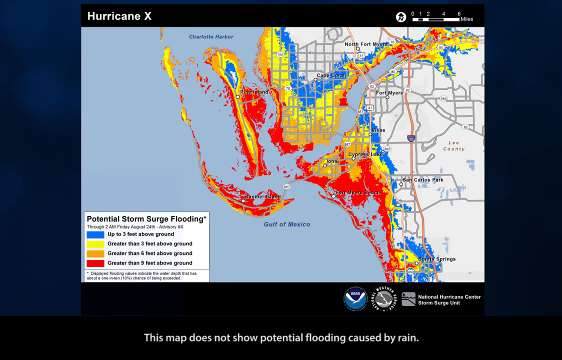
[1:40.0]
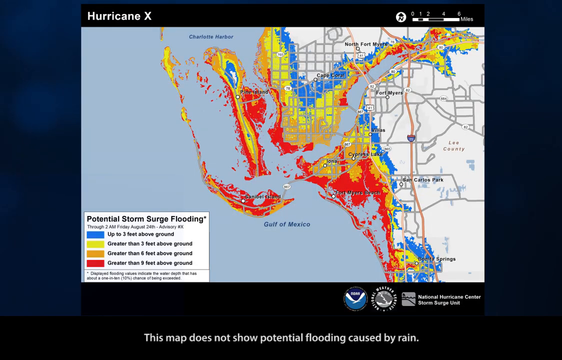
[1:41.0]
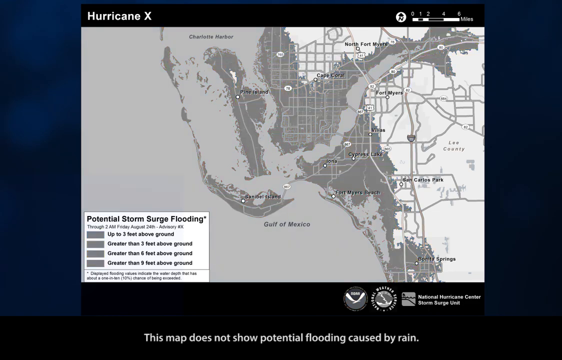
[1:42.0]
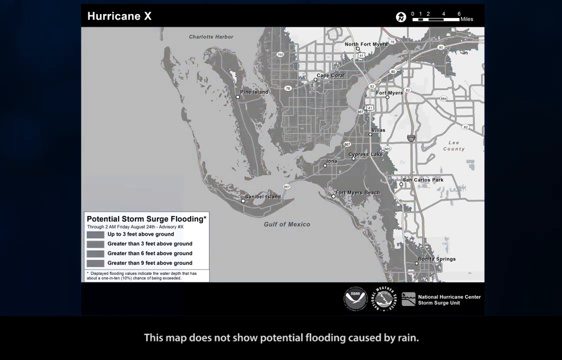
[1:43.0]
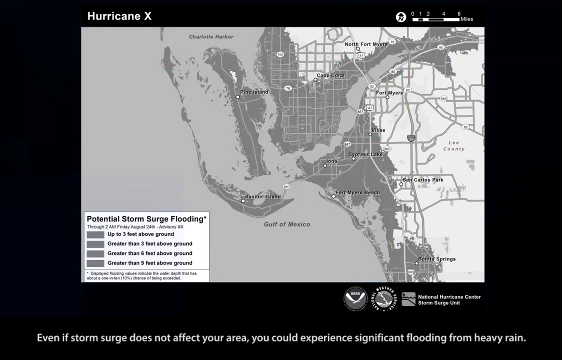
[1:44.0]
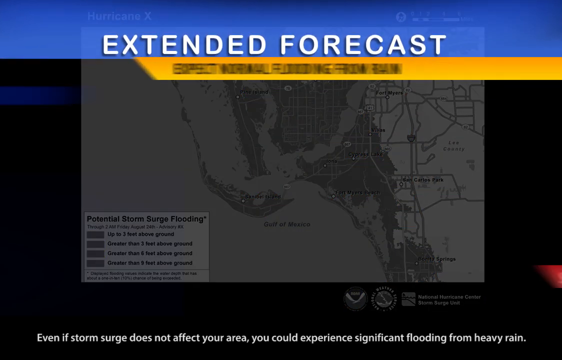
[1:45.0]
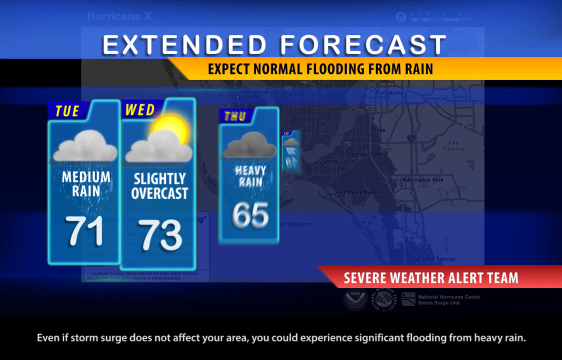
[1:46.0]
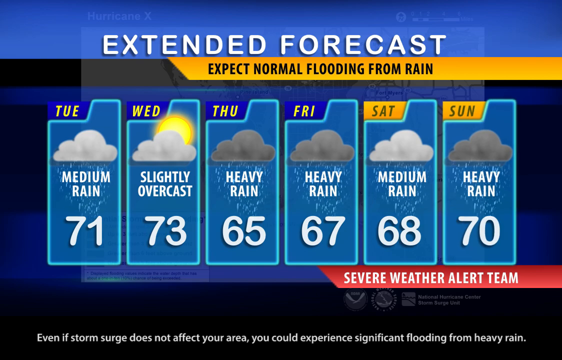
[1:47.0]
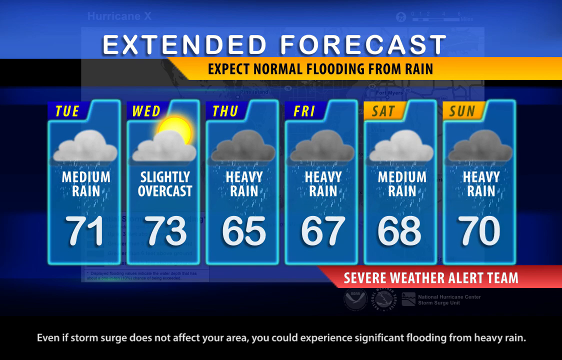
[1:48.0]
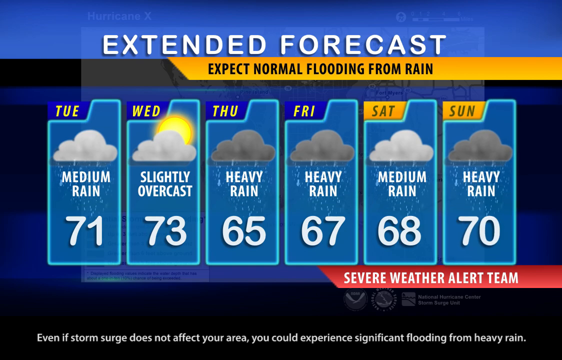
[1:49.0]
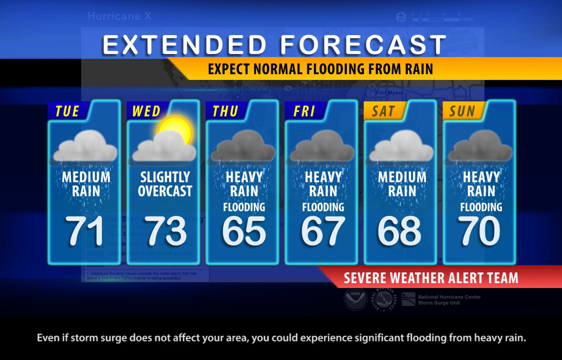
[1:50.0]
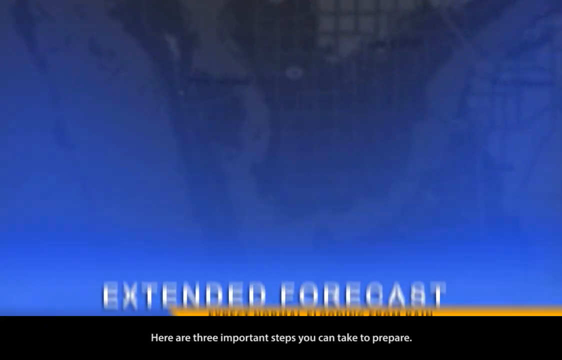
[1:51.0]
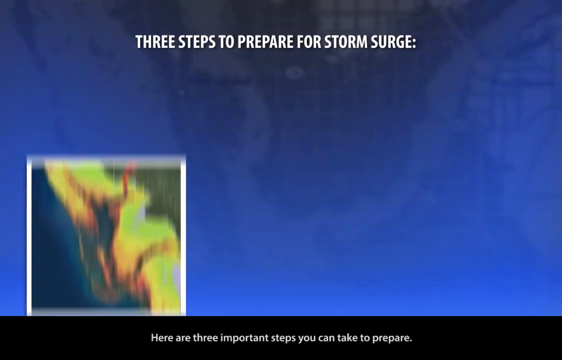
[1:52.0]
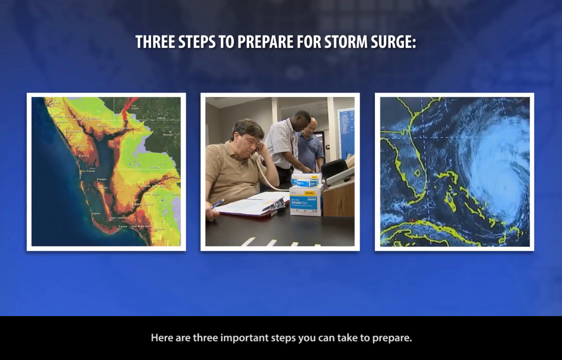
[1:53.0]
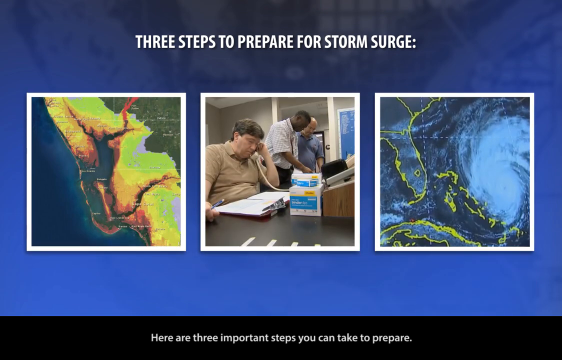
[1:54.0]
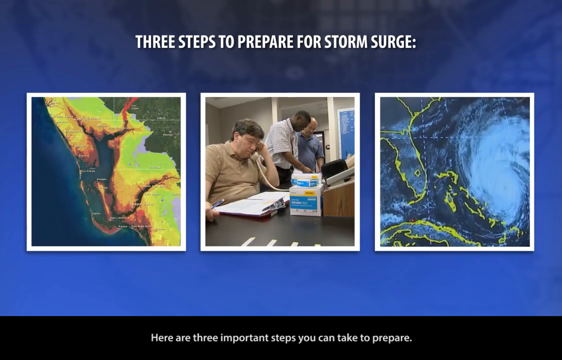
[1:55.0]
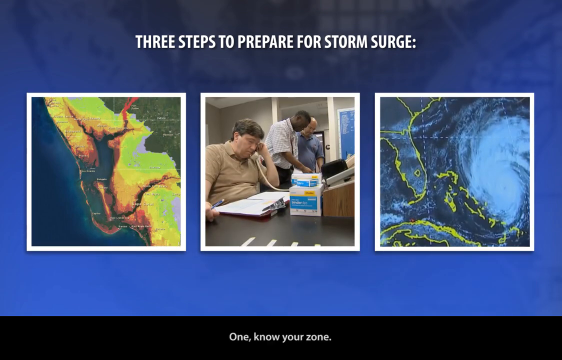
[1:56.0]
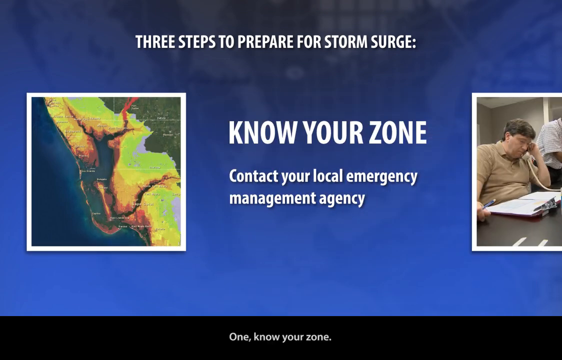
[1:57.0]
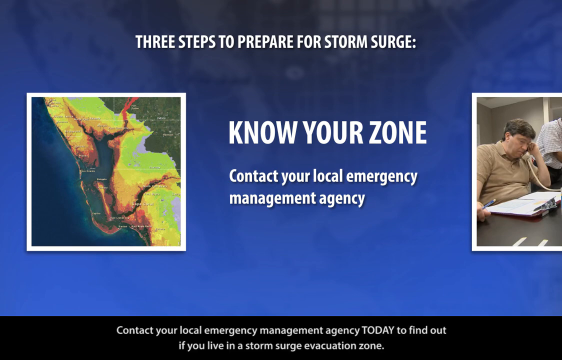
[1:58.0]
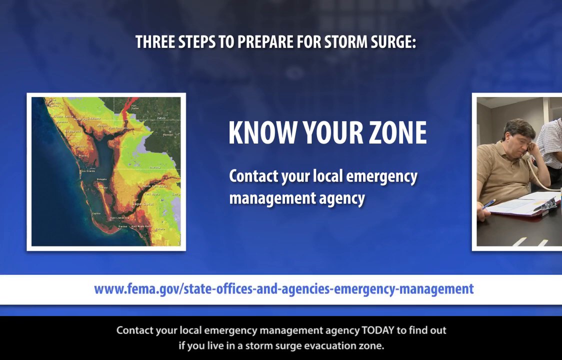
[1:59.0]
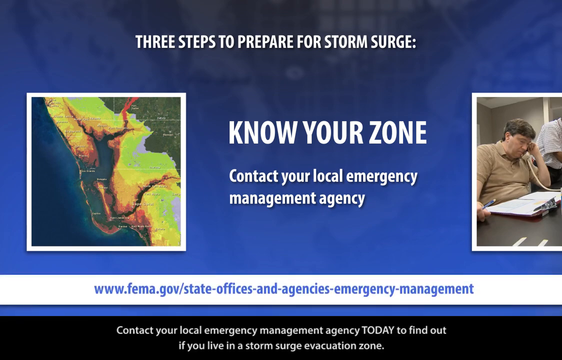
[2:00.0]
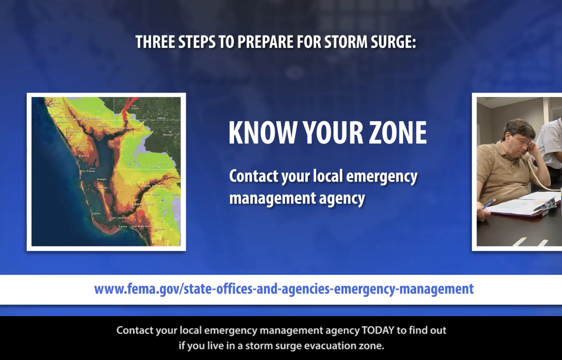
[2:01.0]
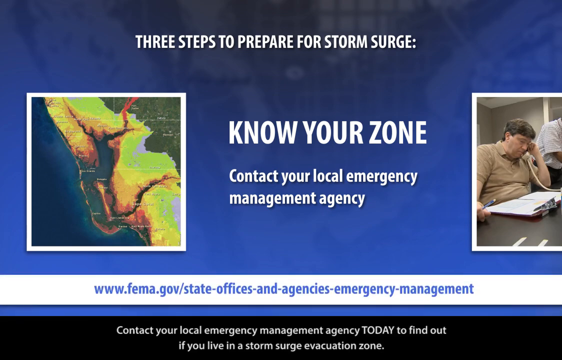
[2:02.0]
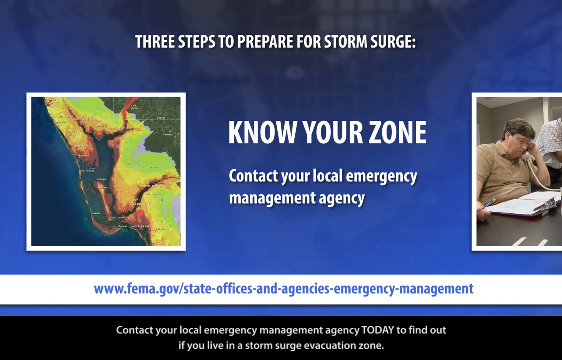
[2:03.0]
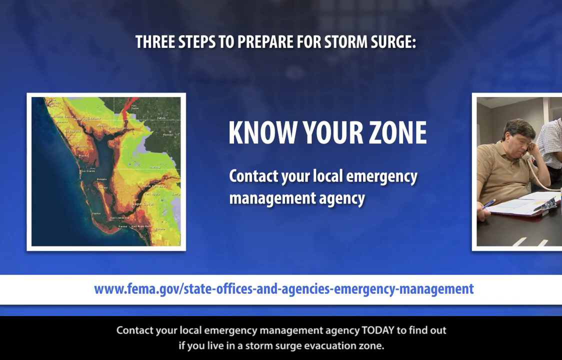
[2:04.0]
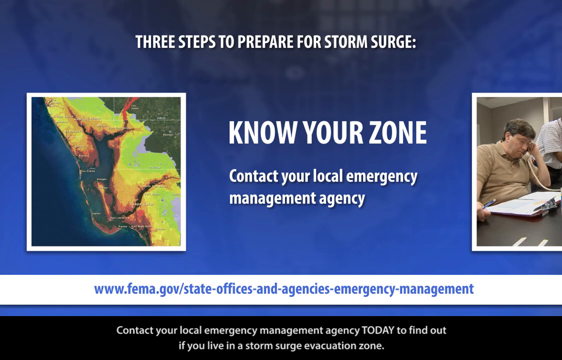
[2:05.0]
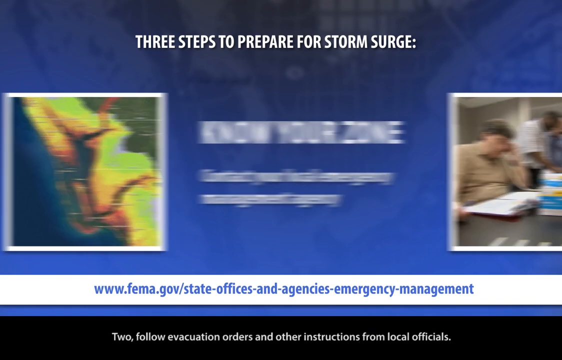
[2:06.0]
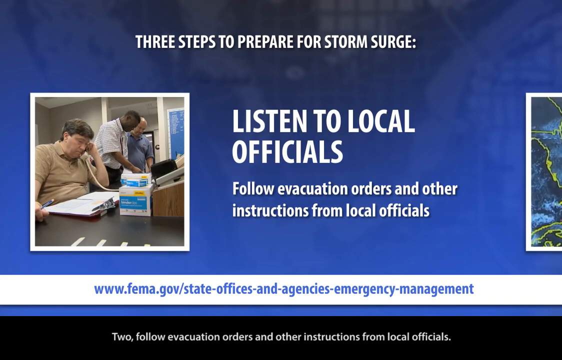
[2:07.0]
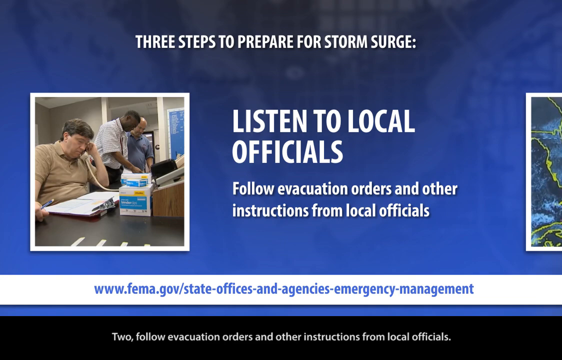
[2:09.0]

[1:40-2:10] A map says "Hurricane X," with the numbers 0 through 5 toward the top and the colors blue, yellow, red and orange. It says "potential storm surge flooding": up to 3 feet above ground is blue, greater than 3 feet is yellow, greater than 5 feet is orange, and greater than 9 feet is red. A black and white view of the map follows, saying "extended forecast" and "expect normal flooding from rain," with Tuesday medium rain 71 degrees, Wednesday slightly overcast 73 degrees, Thursday heavy rain 65 degrees, Friday heavy rain 67 degrees, Saturday medium rain 68 degrees, and Sunday heavy rain 70 degrees. In red it says "severe weather alert team," with flooding for certain days. Text then reads "three steps to prepare for a storm surge." Step one is a map with yellow. Step two is people in an office: one is on the phone looking at two clipboards, and two men look at something on a map. Step three is a blue map with yellow, with the text "Know your zone. Contact your local emergency management team" and "www.fema.gov/state-offices and agencies-emergency-management."